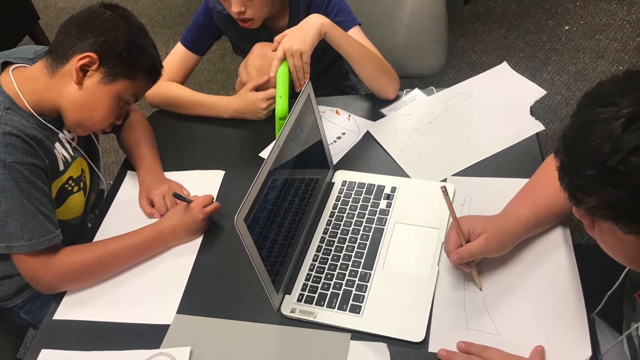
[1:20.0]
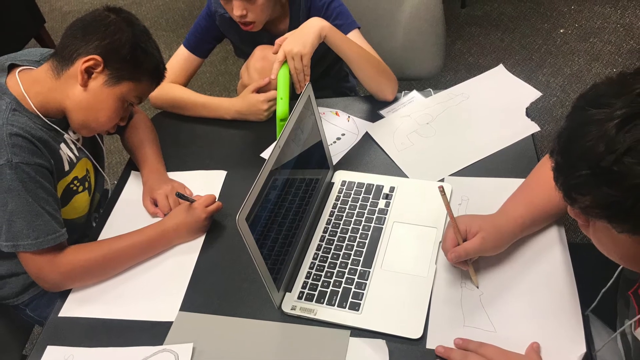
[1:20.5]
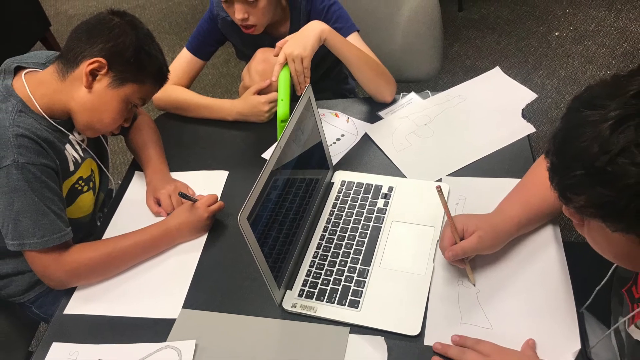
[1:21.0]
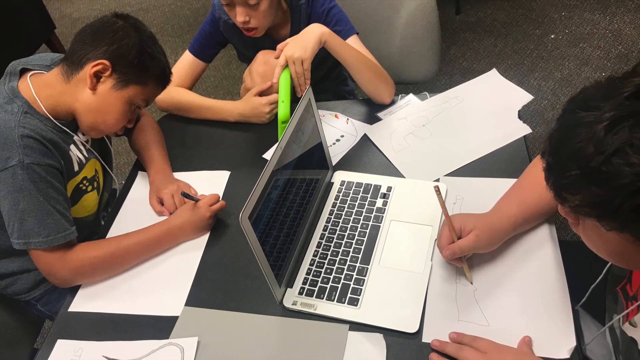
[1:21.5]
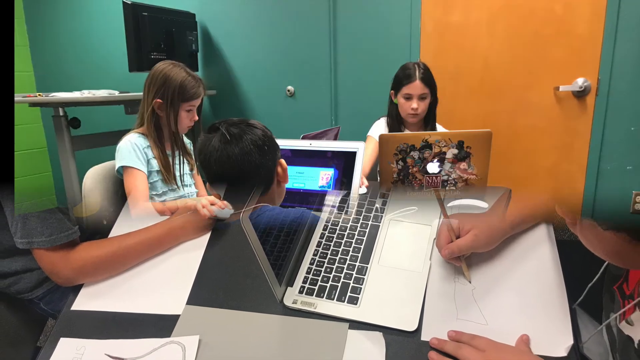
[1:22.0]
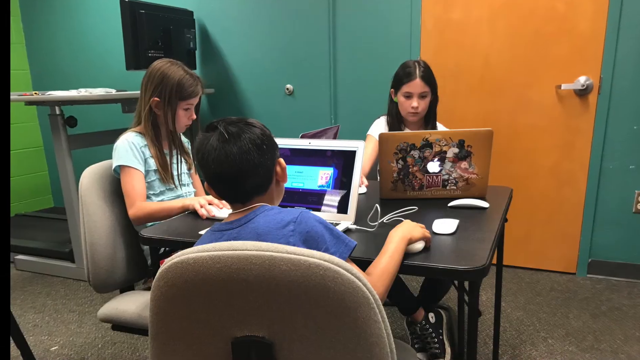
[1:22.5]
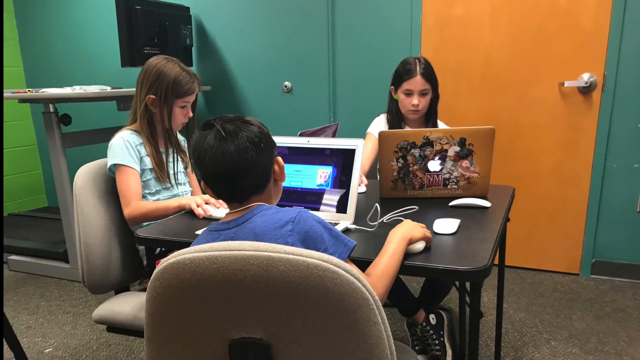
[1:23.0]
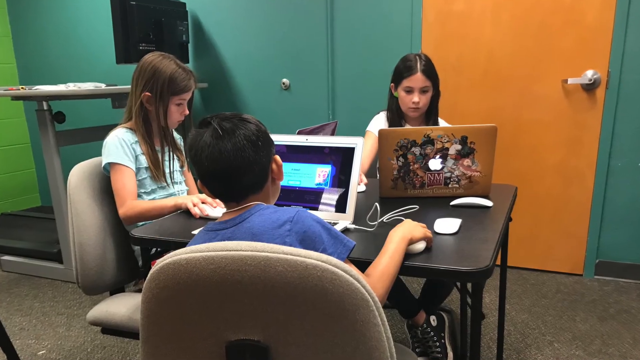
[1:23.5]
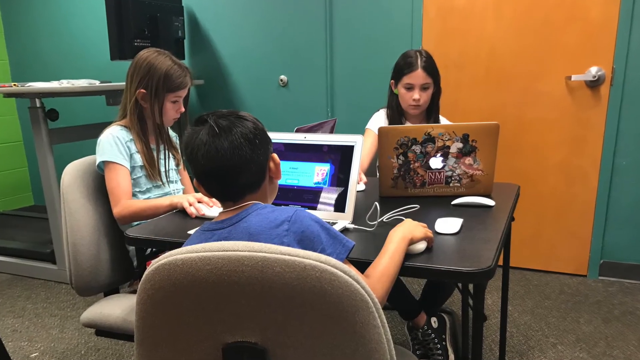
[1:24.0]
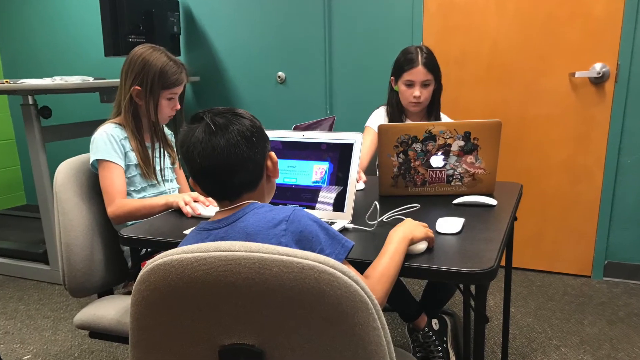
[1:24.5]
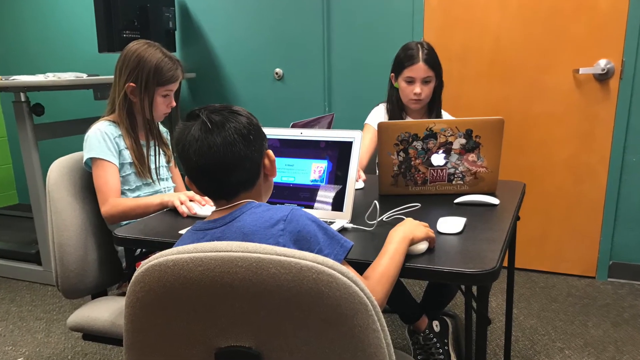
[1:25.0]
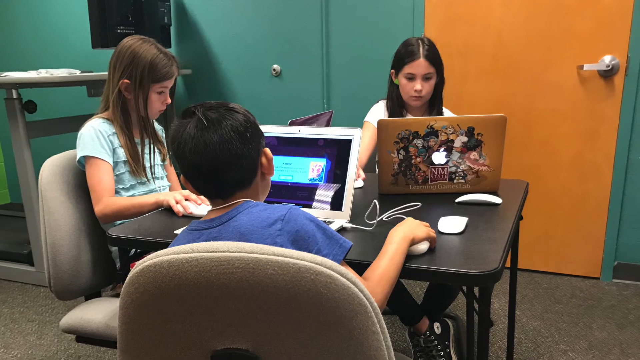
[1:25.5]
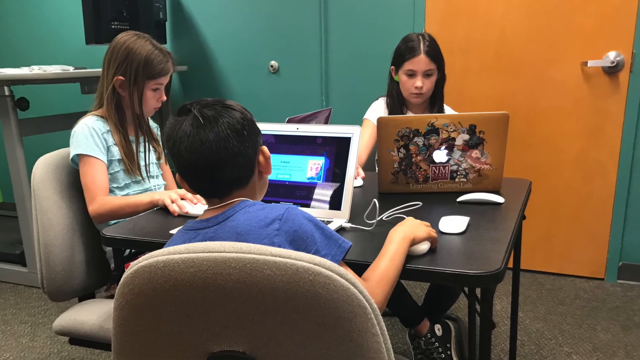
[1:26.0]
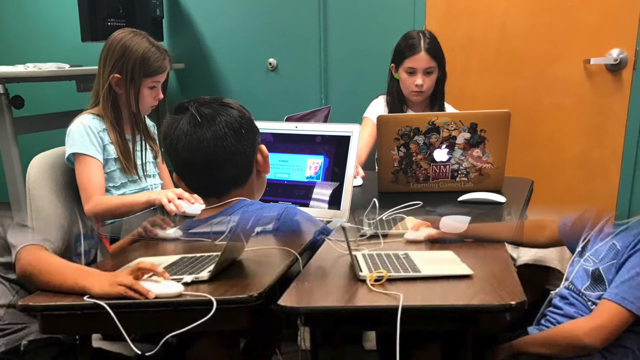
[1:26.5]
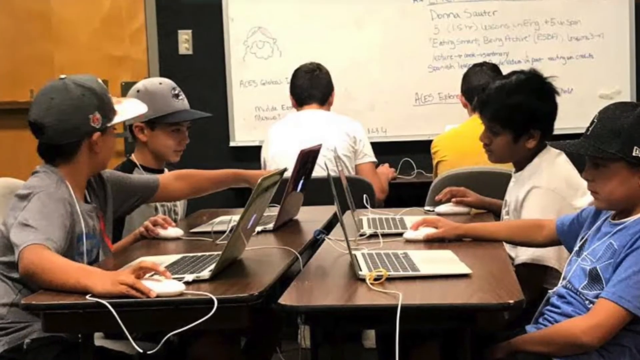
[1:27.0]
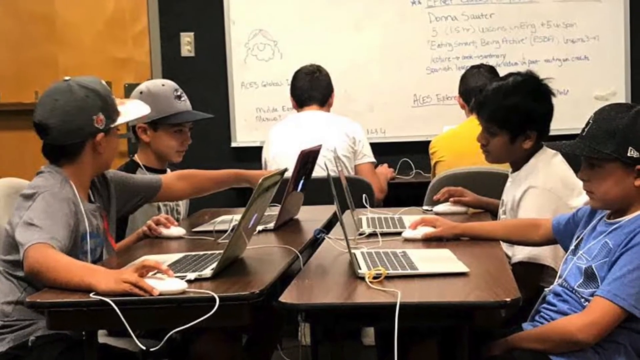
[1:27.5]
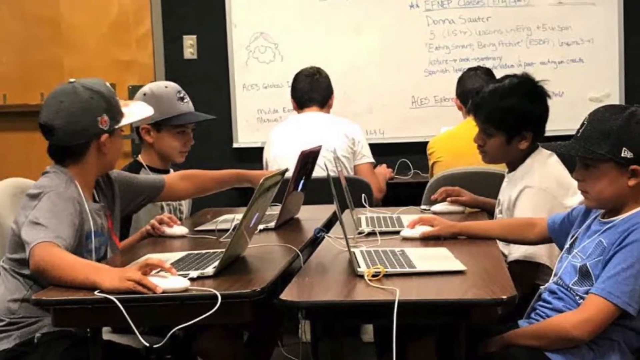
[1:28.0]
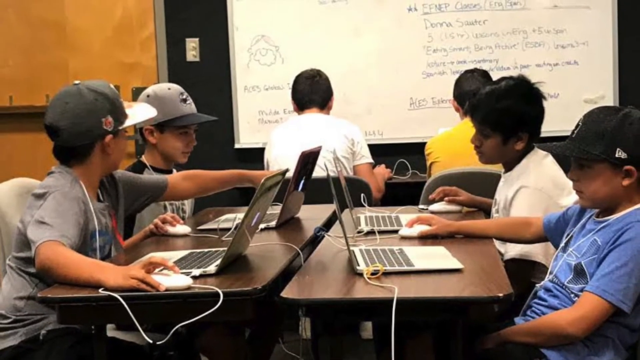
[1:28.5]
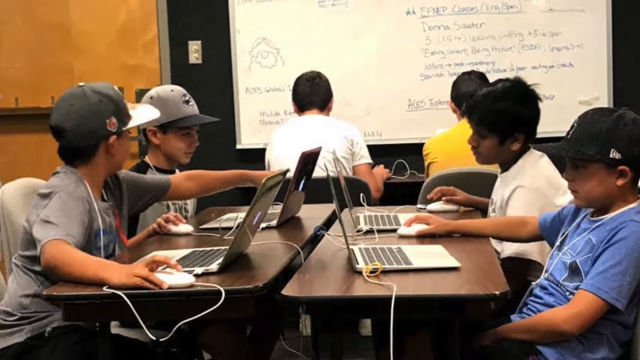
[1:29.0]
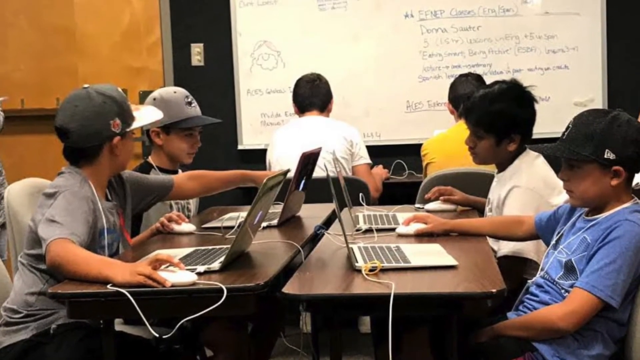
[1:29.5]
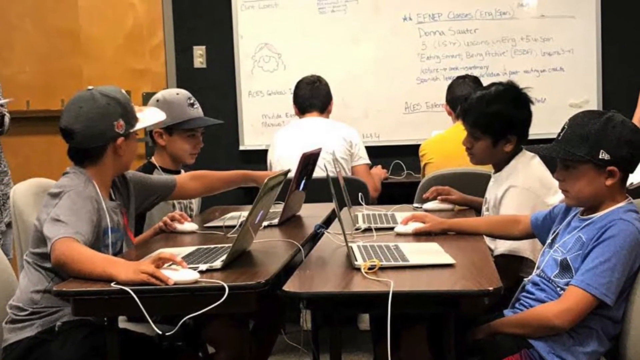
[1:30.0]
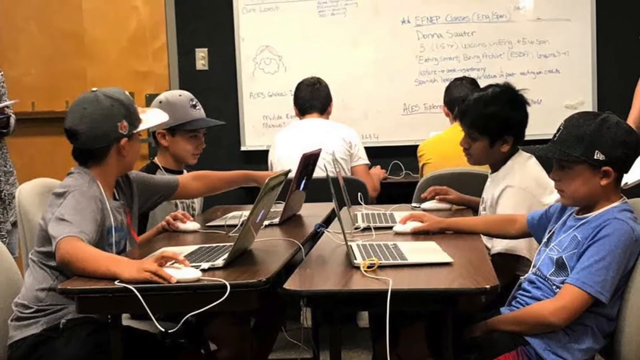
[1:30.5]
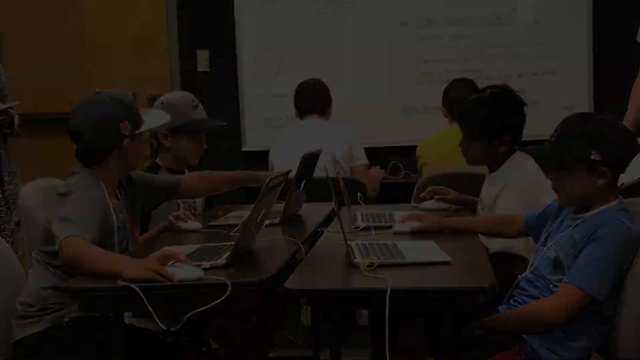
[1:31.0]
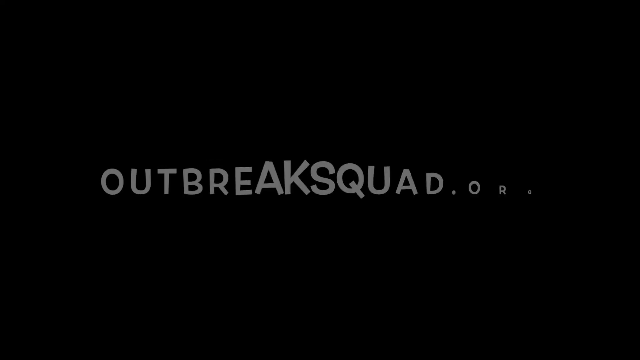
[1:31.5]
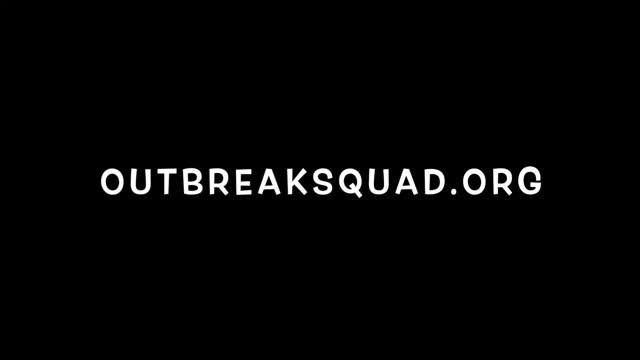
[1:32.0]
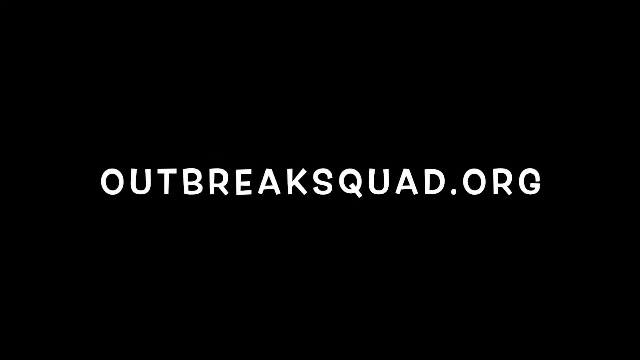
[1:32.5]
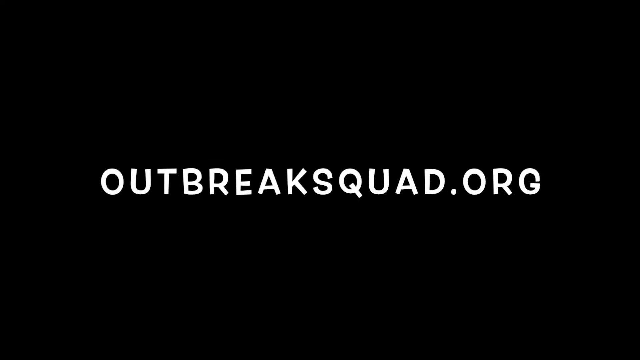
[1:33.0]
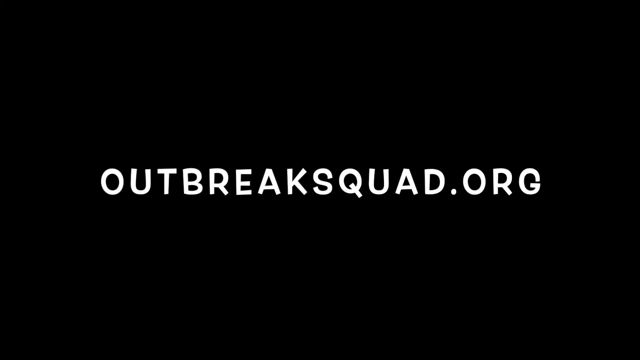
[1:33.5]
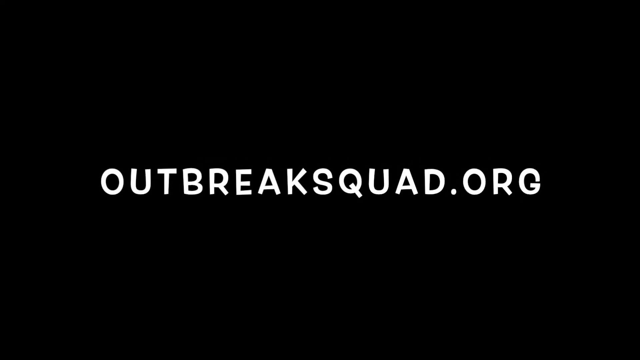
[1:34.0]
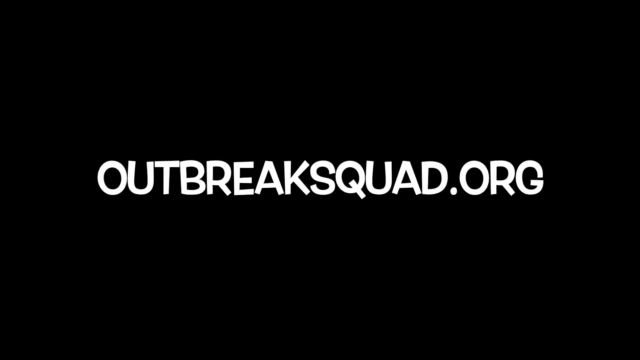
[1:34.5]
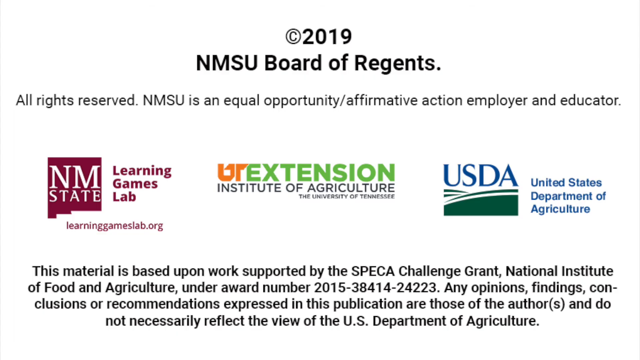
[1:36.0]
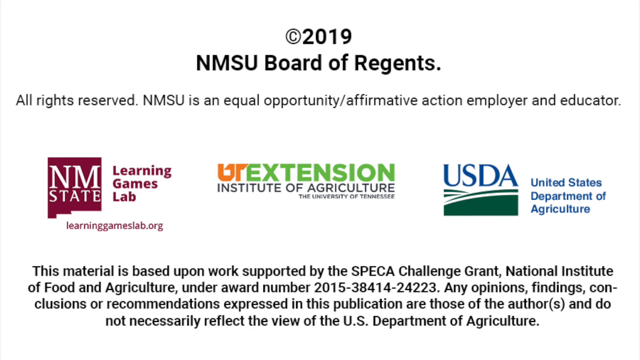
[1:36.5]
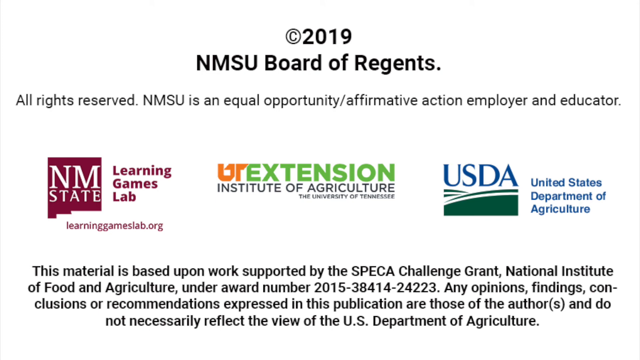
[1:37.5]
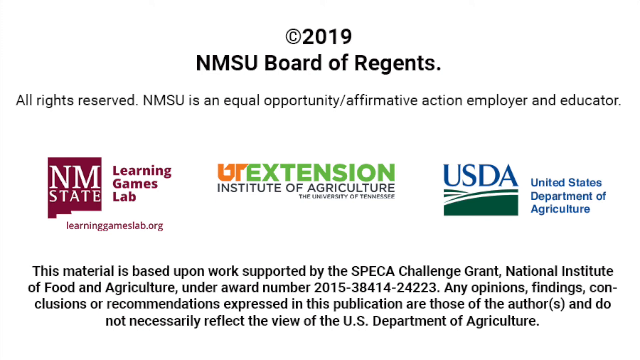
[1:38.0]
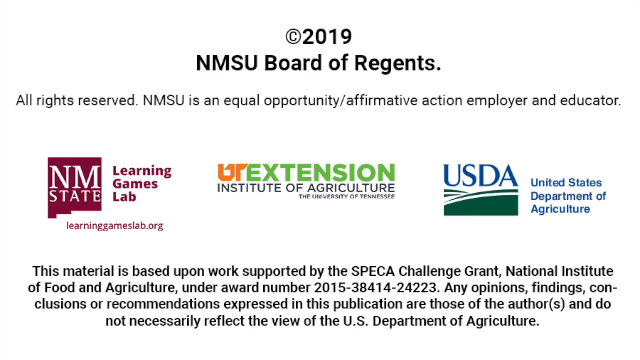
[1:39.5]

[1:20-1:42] Following the superheroes, there is a graphic of the supervillains, such as King Crusty and Cheesy Mac Pizza, detailing the harm they can do. The scene moves to students facing computer screens or writing on paper at a table. An individual on the left of the screen holds a pen in his right hand while his left hand holds the white paper down, and he appears to be making some sort of notes. Somebody to his right, in a seating position that looks higher in the image, watches over him and observes his activities. On the right of the screen another individual holds a pencil in his right hand and appears to be making notes; he has a computer screen in front of him. Next, three children sit at a black table in a very colourful room with green walls and a bright orange door, in comfortable chairs, looking at computer screens. Then comes another classroom scene with a whiteboard in the background and a number of students around tables studying. The video cuts to a black background with the word "OutbreakSquad.org" on it.